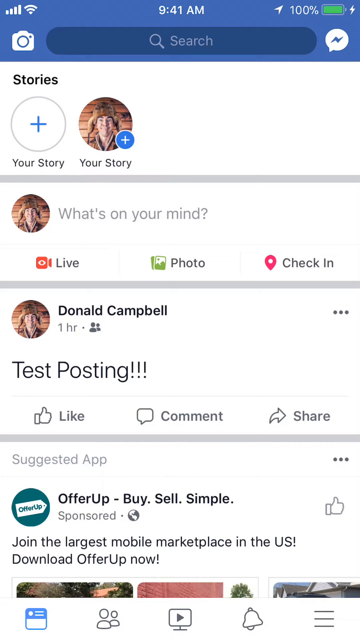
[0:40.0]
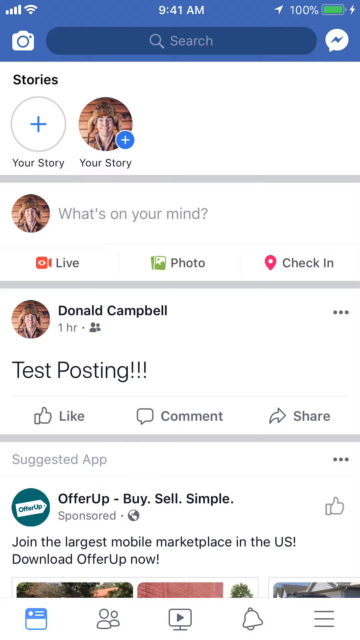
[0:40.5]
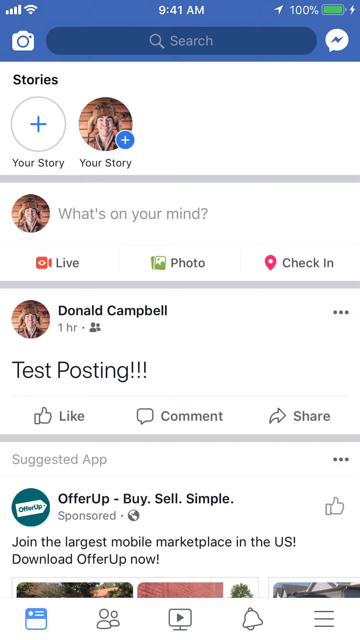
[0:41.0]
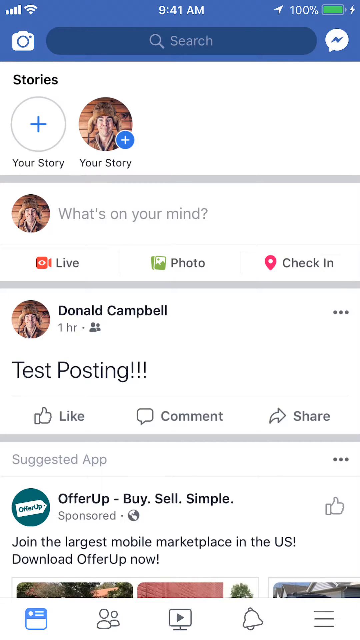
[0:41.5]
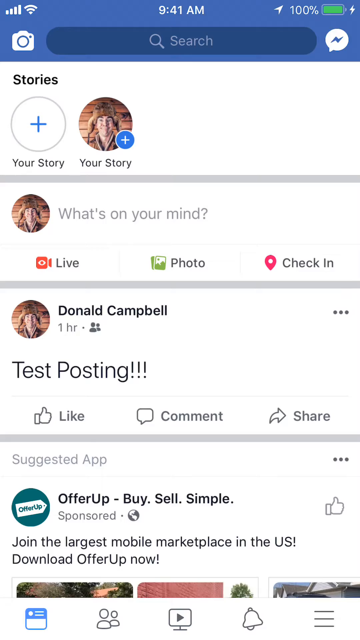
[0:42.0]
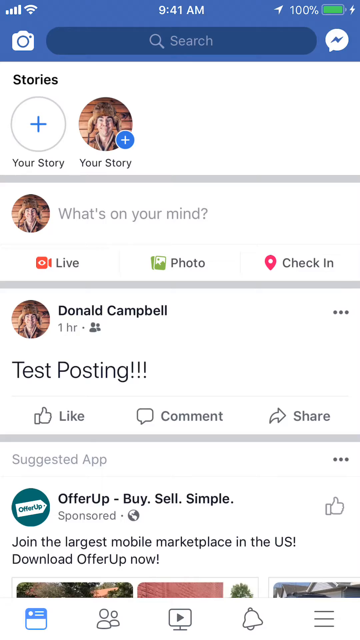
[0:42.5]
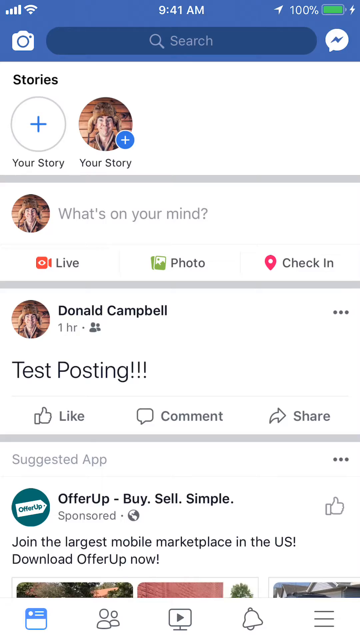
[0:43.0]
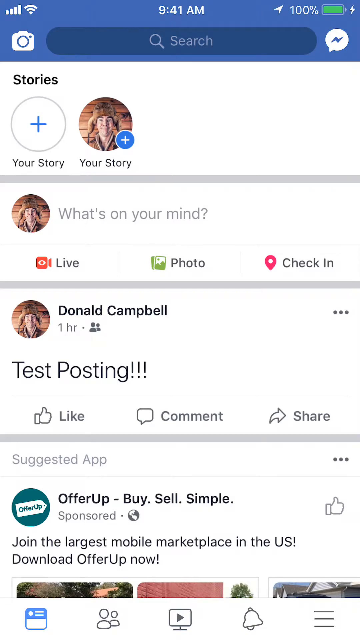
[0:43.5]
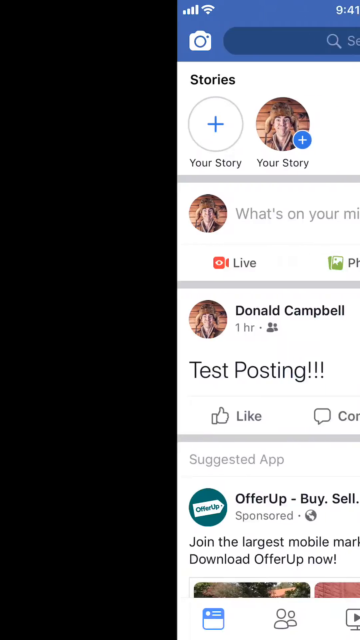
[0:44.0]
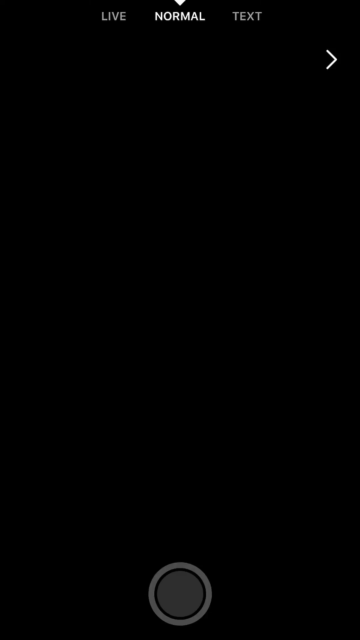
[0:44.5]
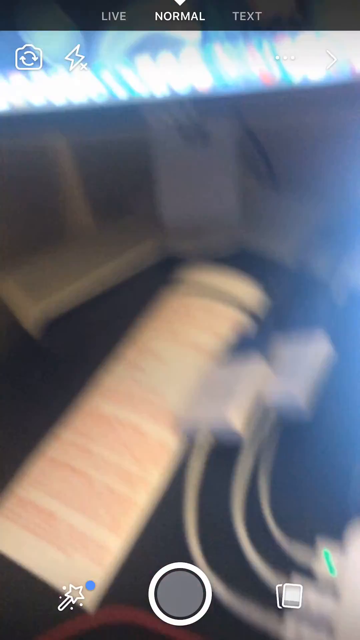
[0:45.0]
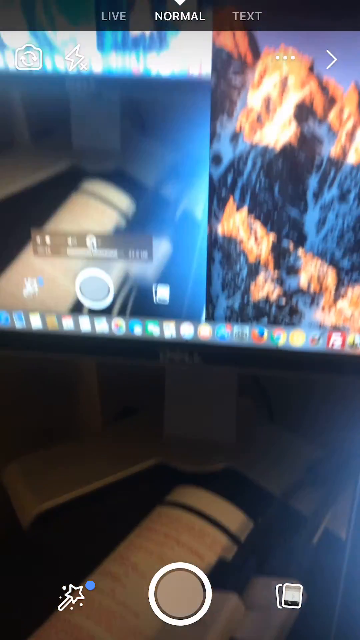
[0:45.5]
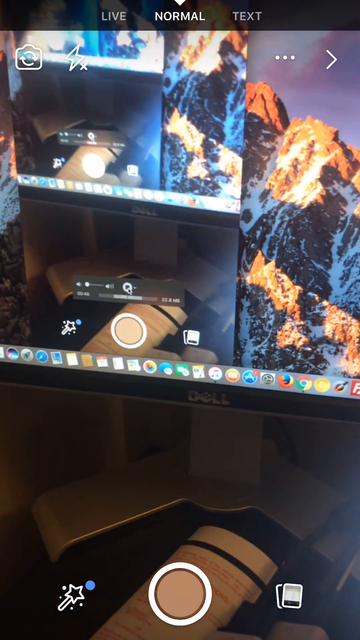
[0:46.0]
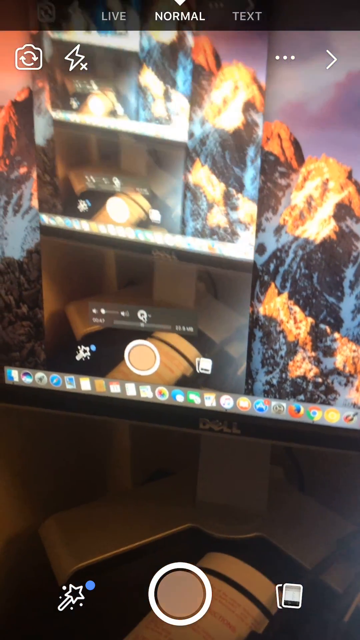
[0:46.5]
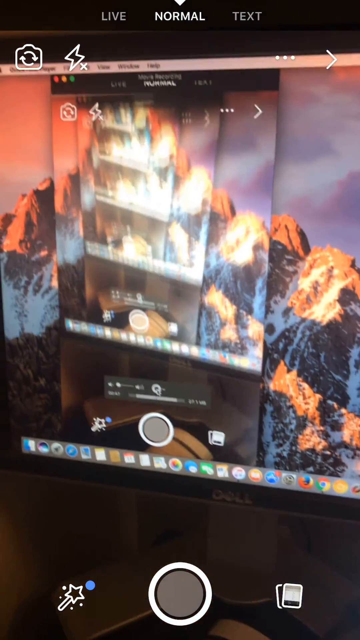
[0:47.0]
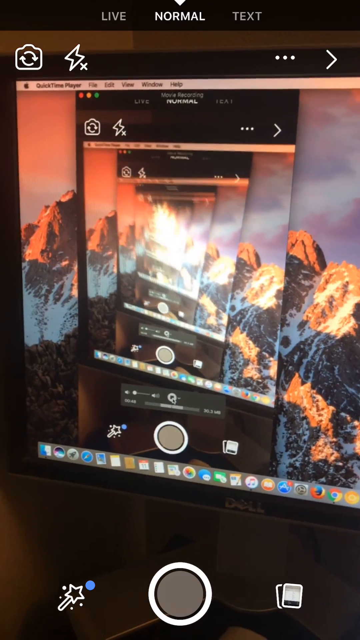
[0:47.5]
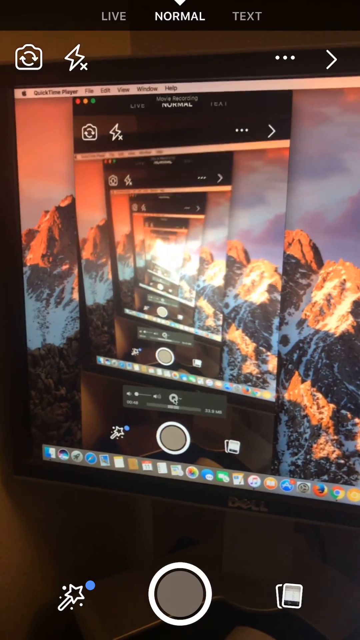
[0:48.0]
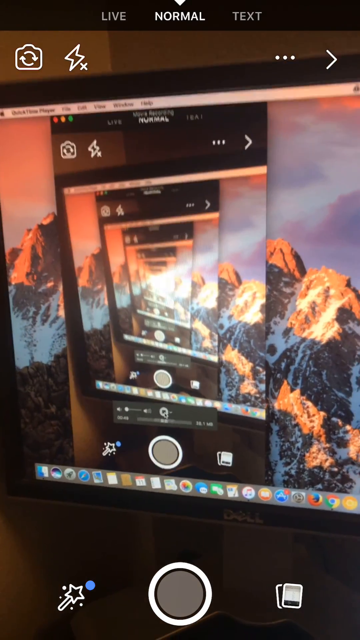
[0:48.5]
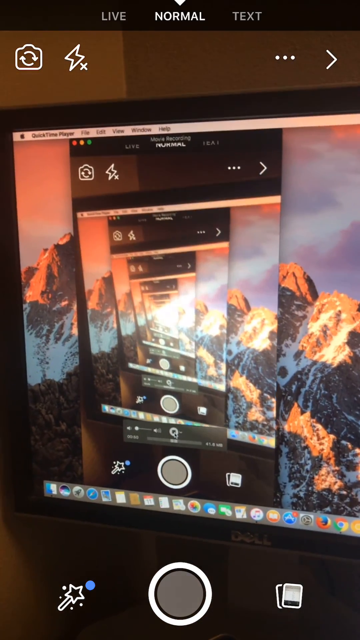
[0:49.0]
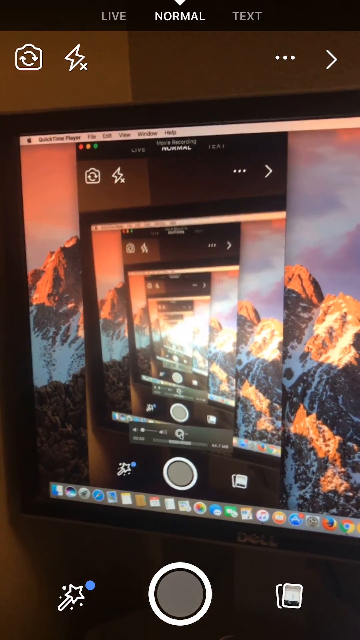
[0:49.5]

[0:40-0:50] Donald Campbell's Facebook app remains on screen. The battery in the upper right corner is at 100%, the time at the top center is 9:41 AM, and the signal strength bars and Wi-Fi icon are in the upper left corner. Below them is the camera icon for adding photos and videos, a search bar in the center with a magnifying glass and the word "search", and the Facebook Messenger icon to its right. Underneath are stories, a plus sign and "your story". Below that is Donald Campbell's profile photo, next to which it says "what's on your mind". Beneath that is the Facebook Live icon, a red video camera, with "photo" and a photo icon in the middle and a location icon with "check in" on the right. The user then shows the display of their computer monitor, which looks like it has a volcano image on it.